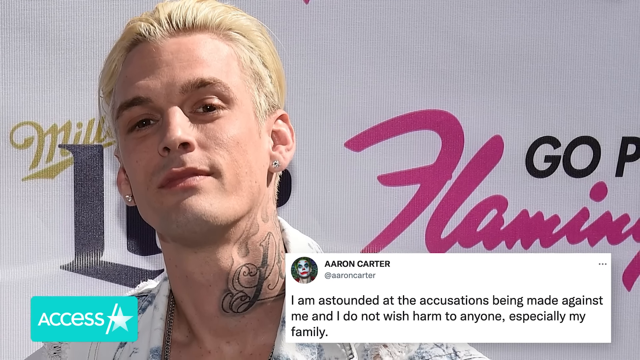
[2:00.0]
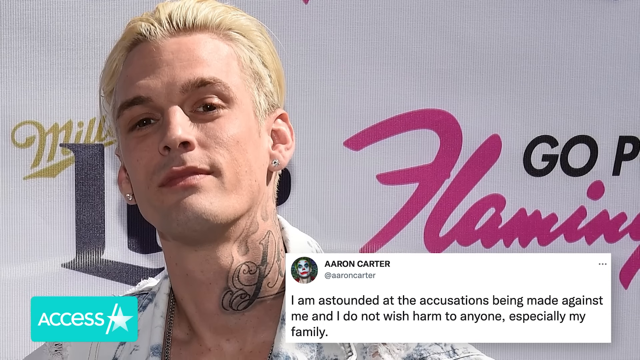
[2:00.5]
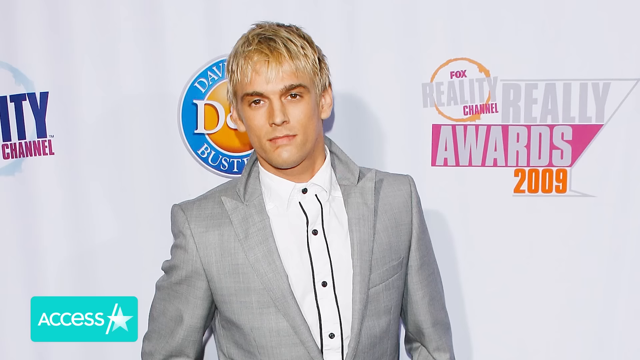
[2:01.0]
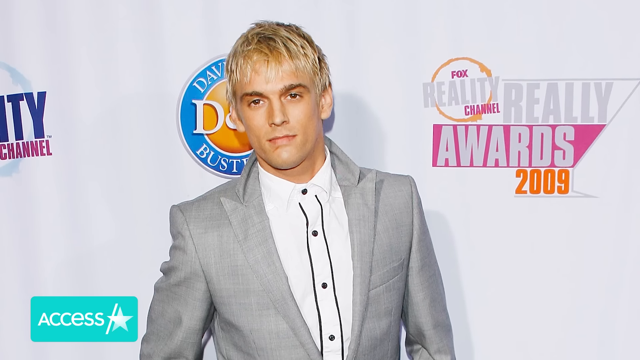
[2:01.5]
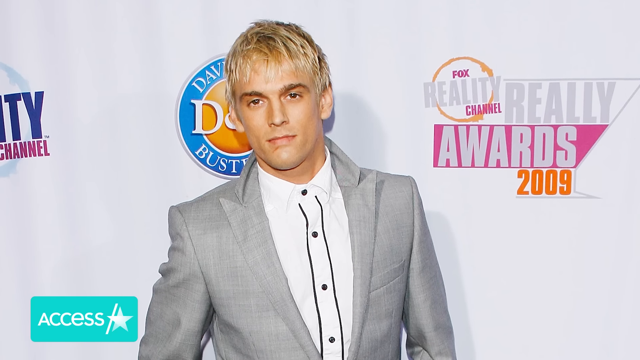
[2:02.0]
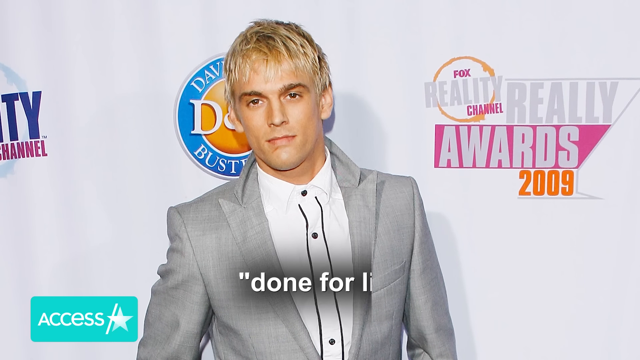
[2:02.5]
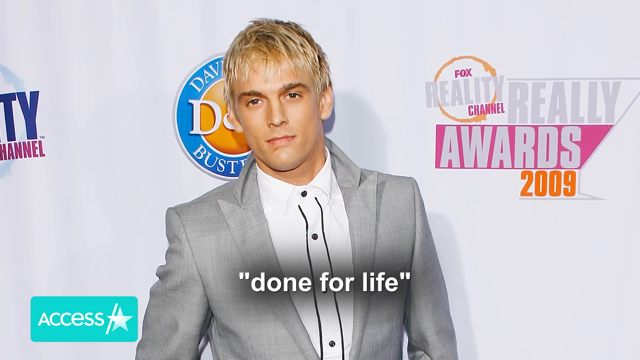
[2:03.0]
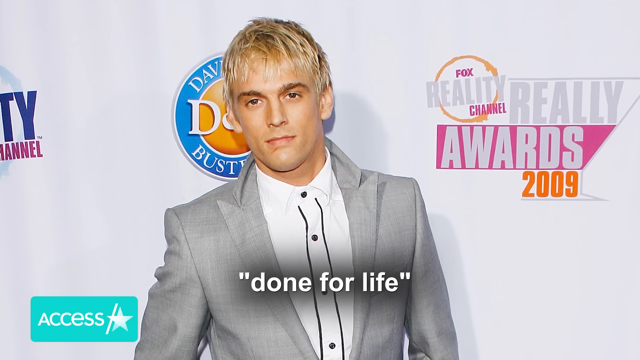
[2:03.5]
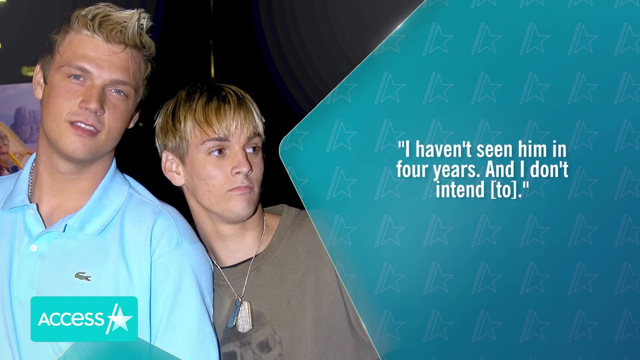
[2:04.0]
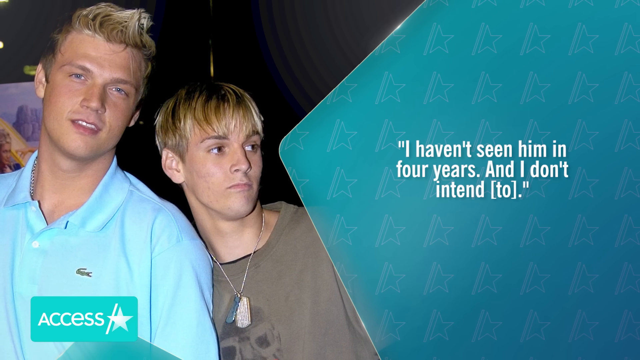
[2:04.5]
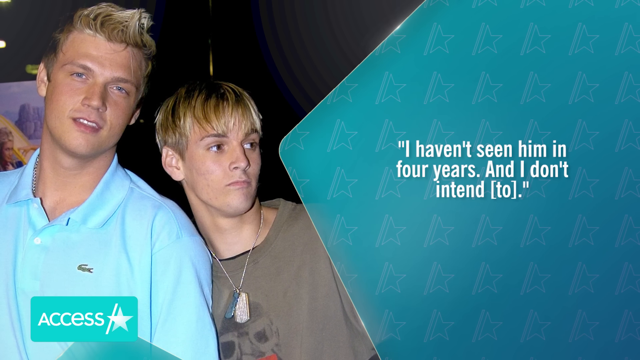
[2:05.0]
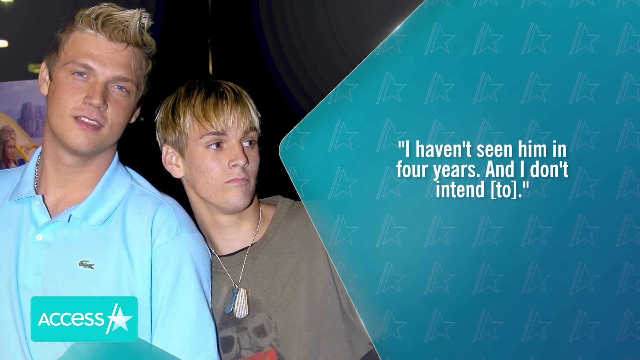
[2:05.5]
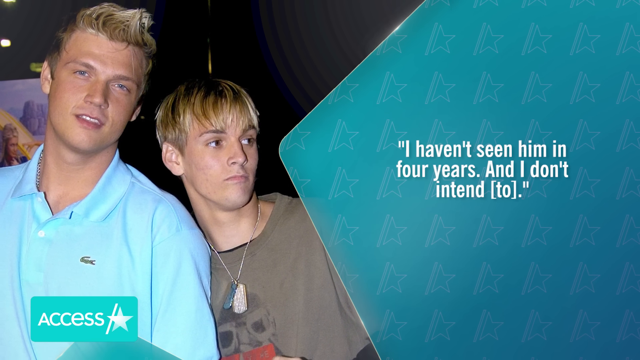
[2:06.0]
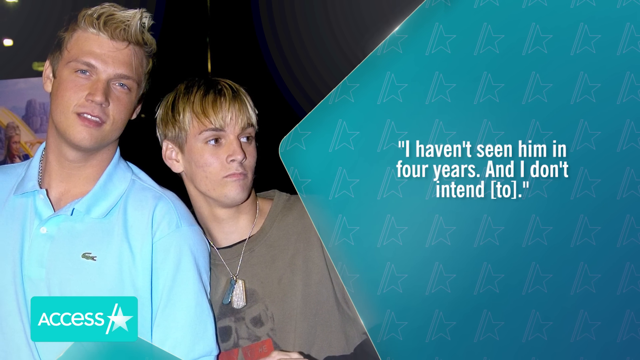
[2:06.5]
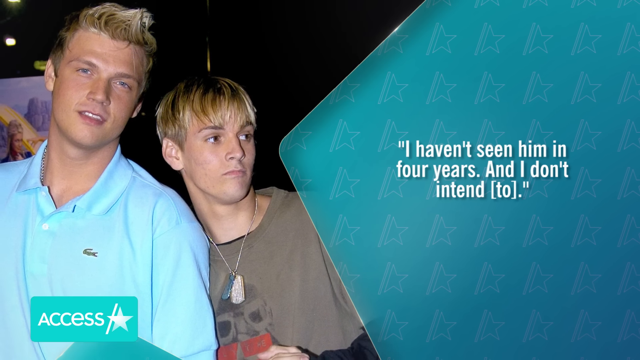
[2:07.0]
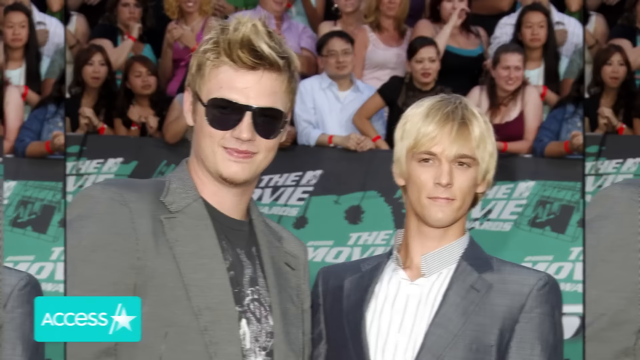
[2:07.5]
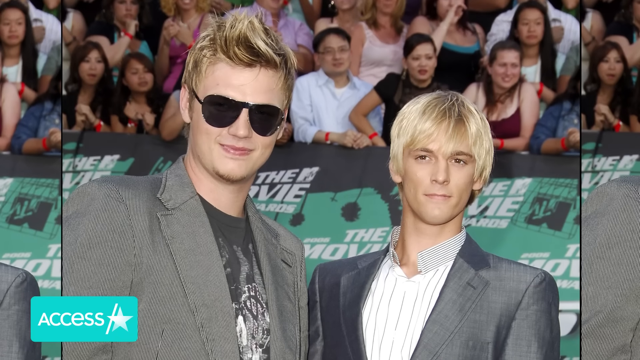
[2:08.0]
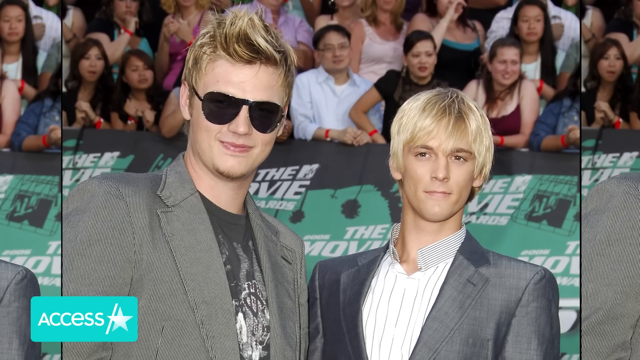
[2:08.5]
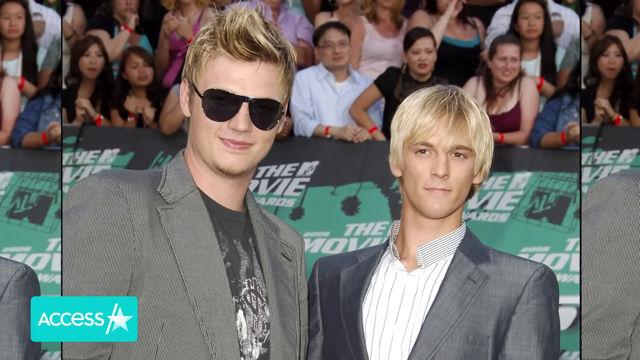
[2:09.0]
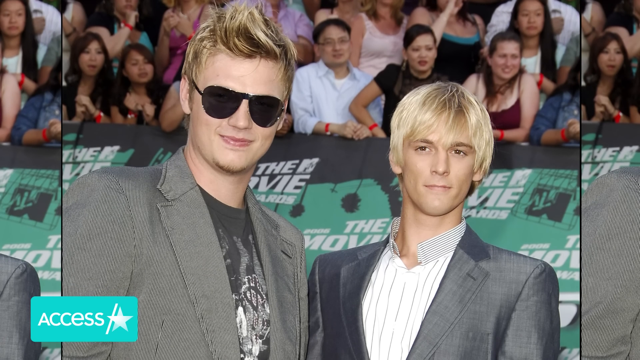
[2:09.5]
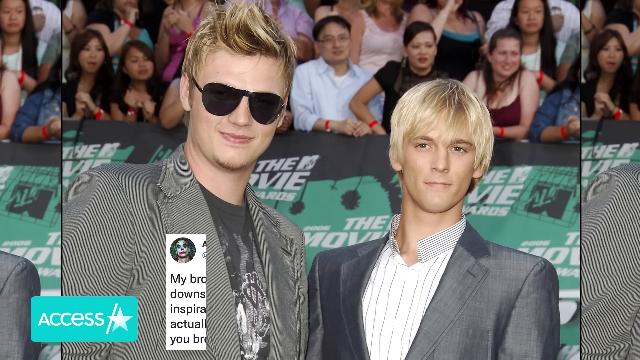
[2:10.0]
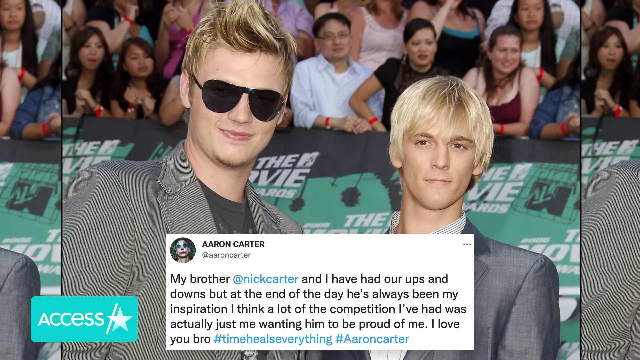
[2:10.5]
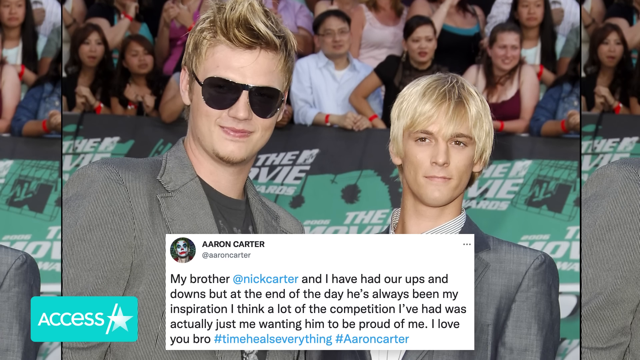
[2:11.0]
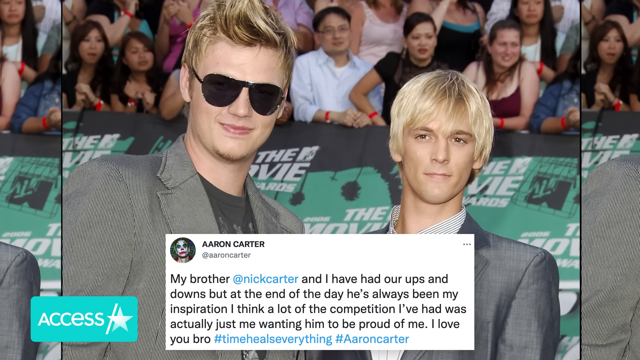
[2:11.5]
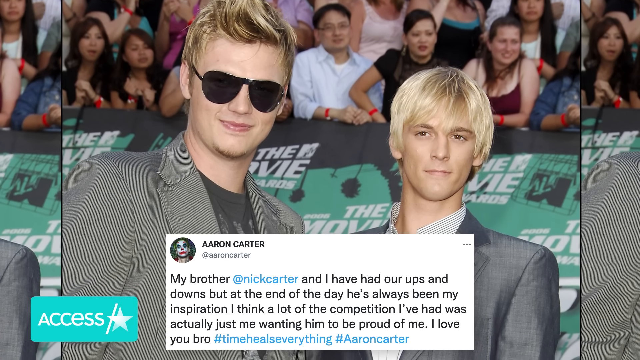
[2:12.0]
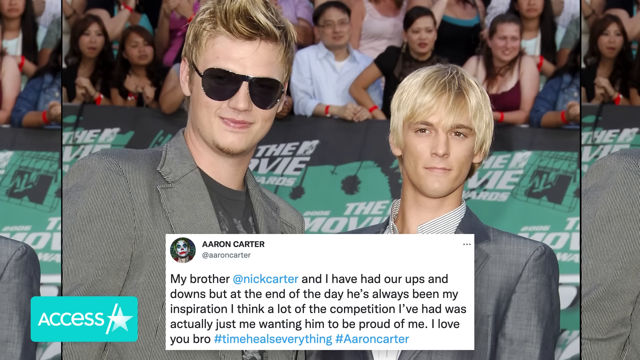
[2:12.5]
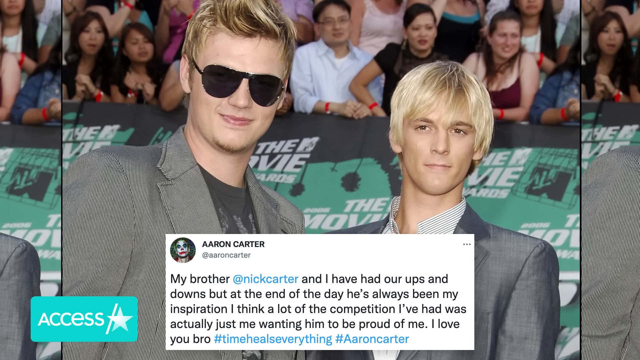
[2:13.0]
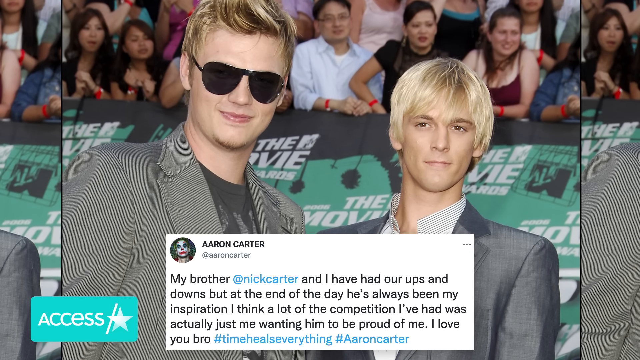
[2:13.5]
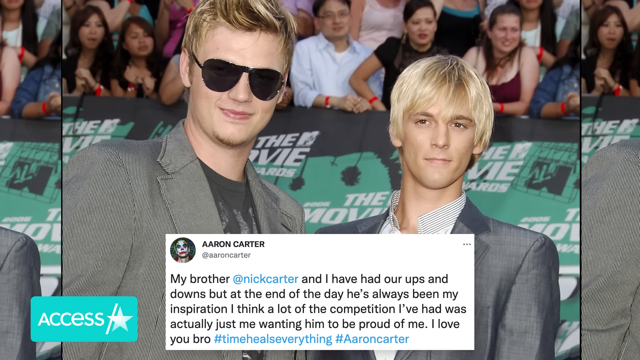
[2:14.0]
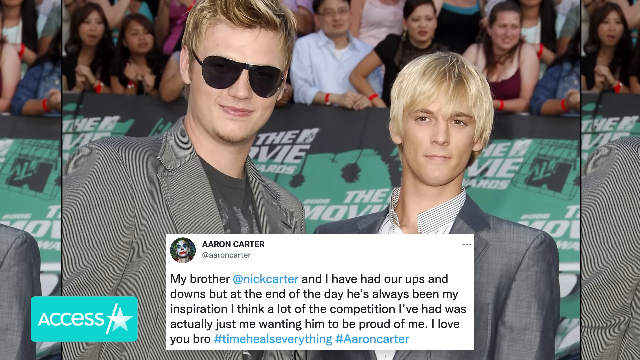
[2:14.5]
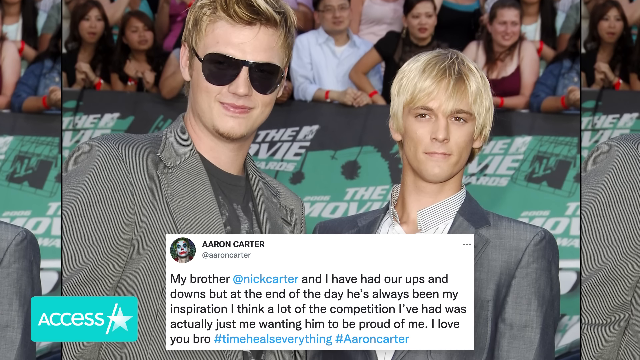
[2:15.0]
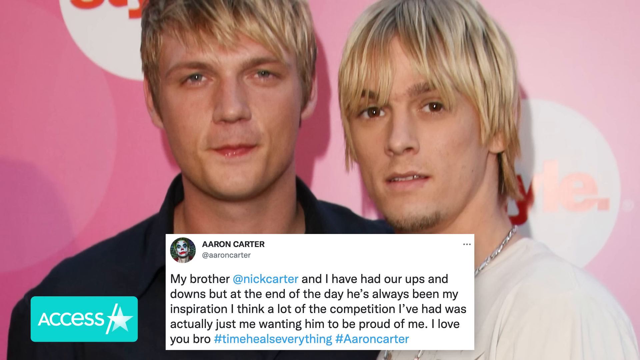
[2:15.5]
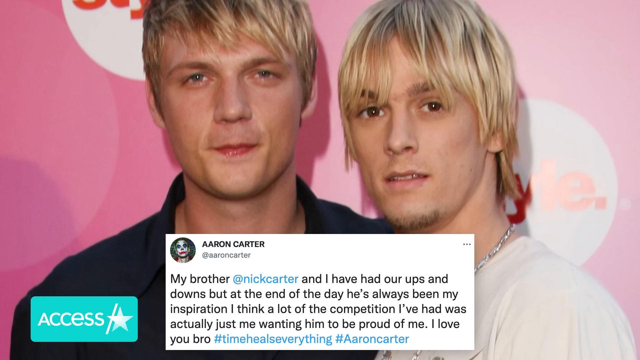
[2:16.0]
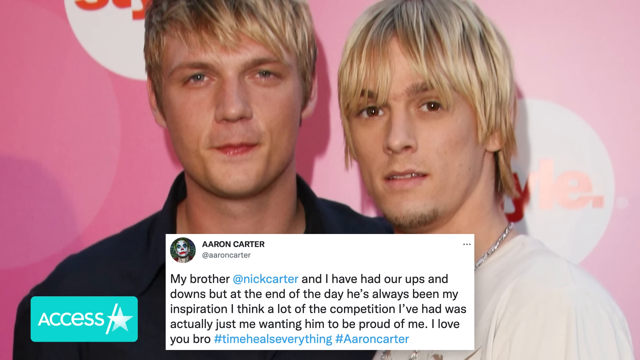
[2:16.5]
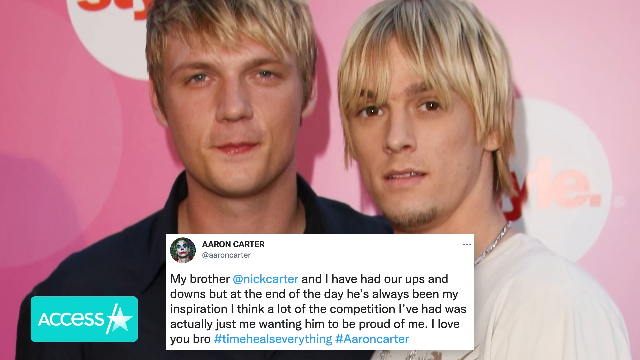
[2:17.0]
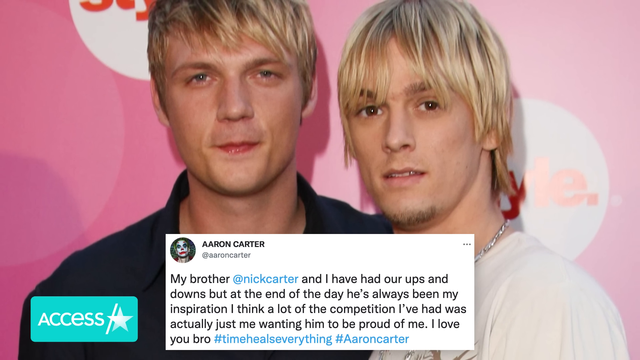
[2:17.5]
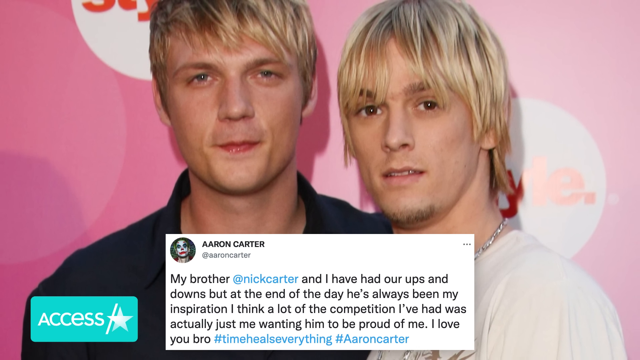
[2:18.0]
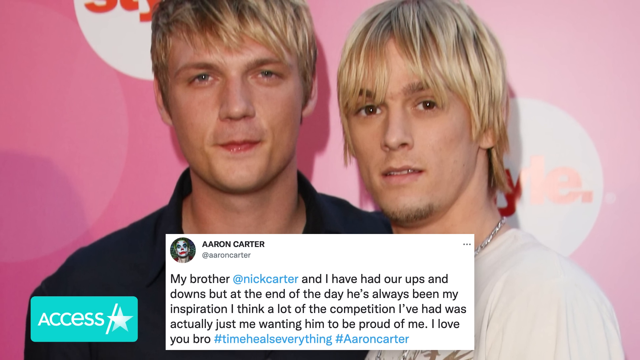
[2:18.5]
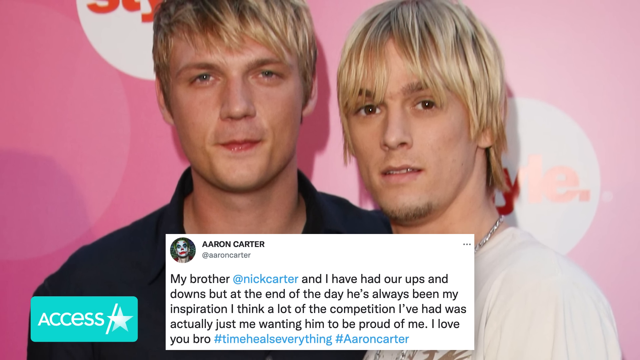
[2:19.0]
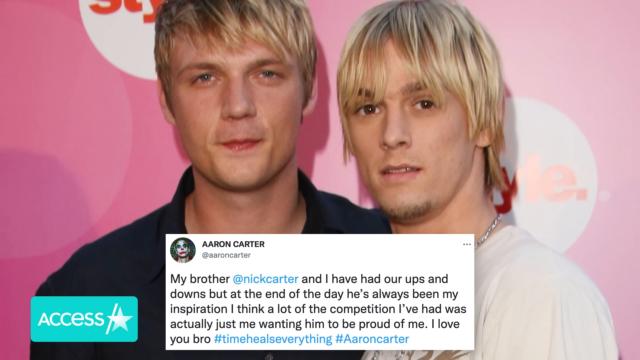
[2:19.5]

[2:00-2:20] Aaron Carter appears wearing a suit at another event. The scene then shows Nick Carter and Aaron Carter together on the left side, with a quote on the right side that says "I haven't seen him in four years and I don't intend to." Next, Aaron Carter is on the right and Nick Carter on the left at some sort of event with a lot of spectators in the background; both men wear suits and Nick Carter wears sunglasses, while a tweet appears at the bottom. Another image of Nick Carter and Aaron Carter together follows with another tweet. Multiple images show the two brothers together at different separate events, with tweets from Aaron Carter himself displayed at the bottom, about his brother and the ups and downs of their relationship.